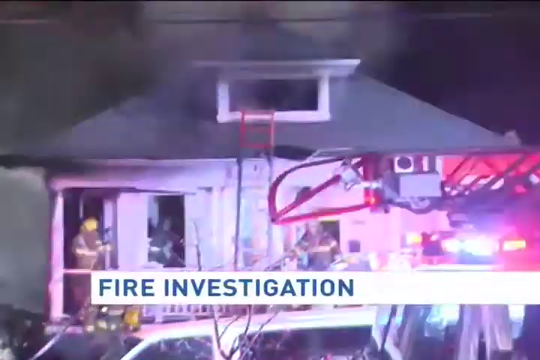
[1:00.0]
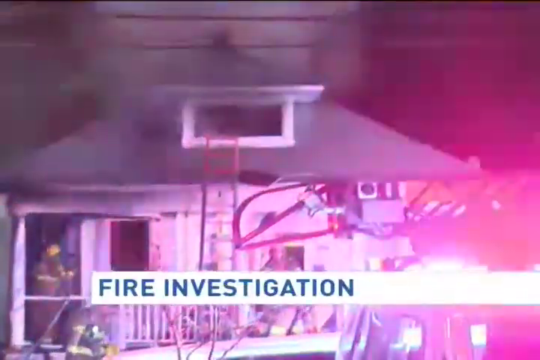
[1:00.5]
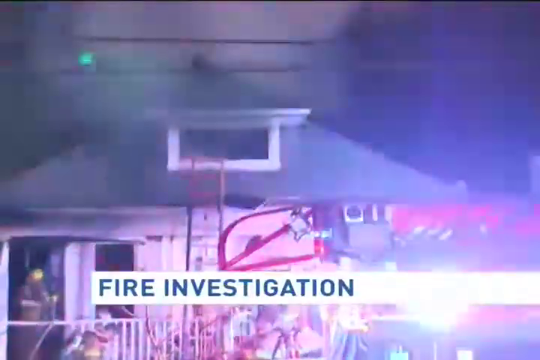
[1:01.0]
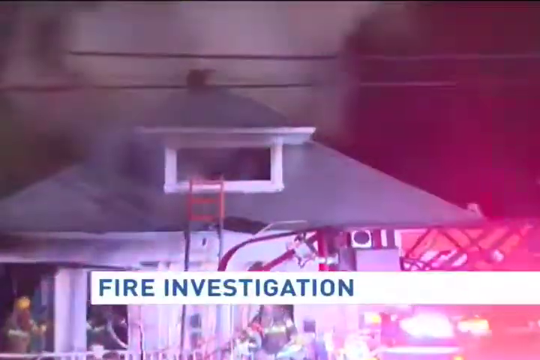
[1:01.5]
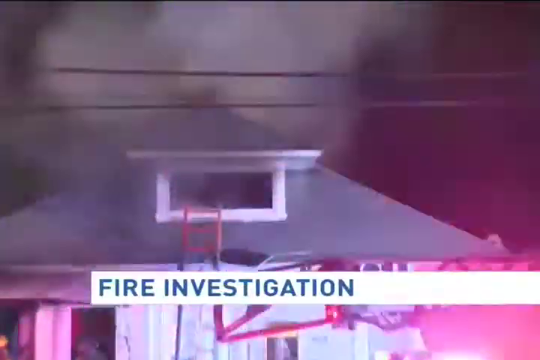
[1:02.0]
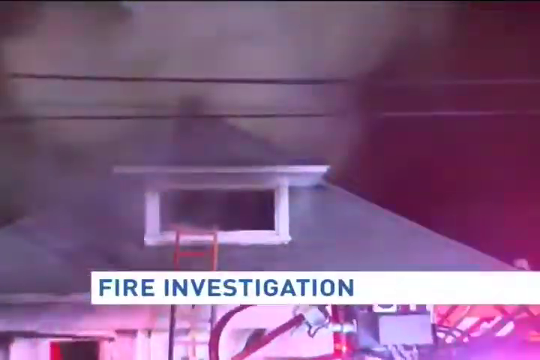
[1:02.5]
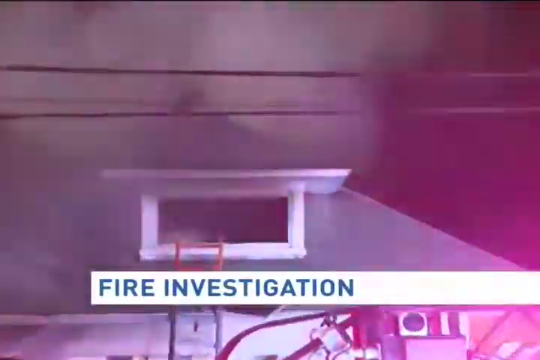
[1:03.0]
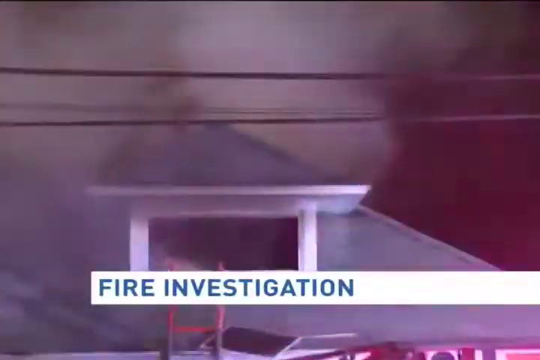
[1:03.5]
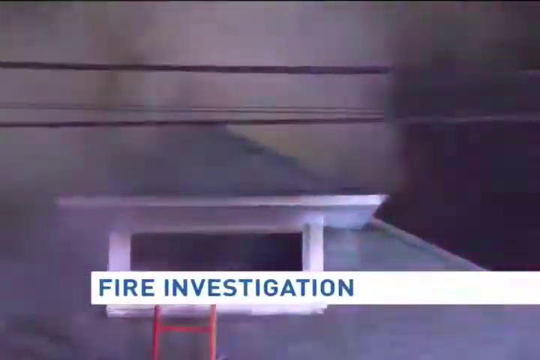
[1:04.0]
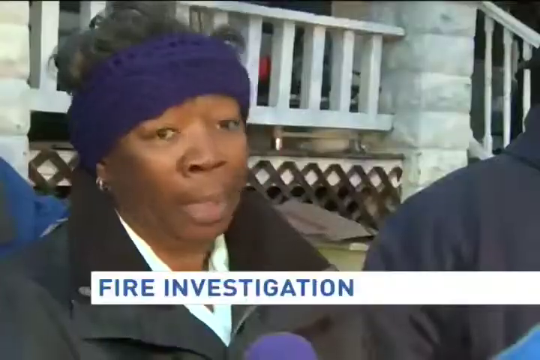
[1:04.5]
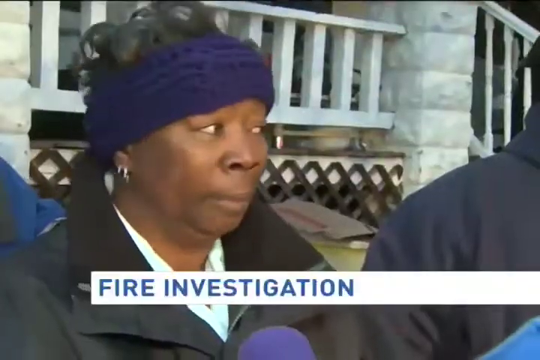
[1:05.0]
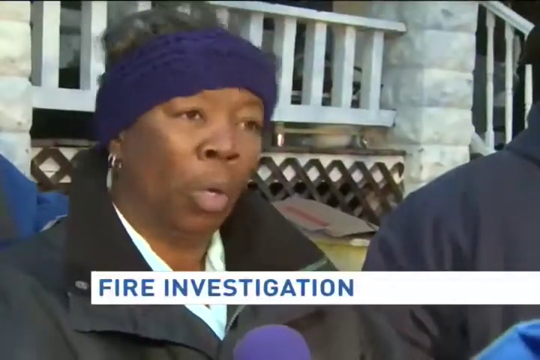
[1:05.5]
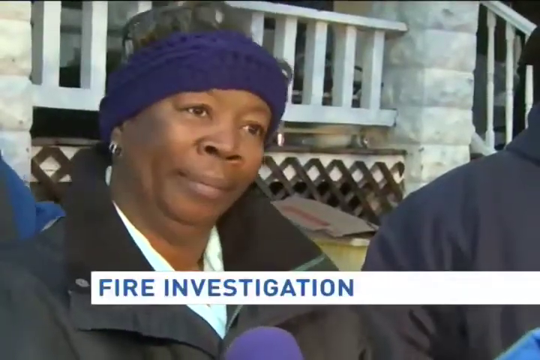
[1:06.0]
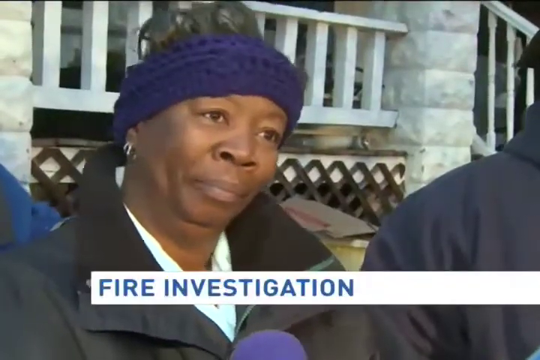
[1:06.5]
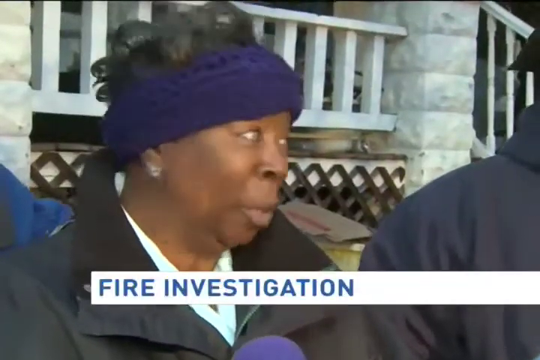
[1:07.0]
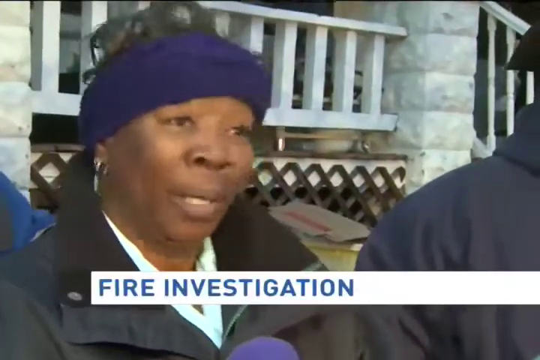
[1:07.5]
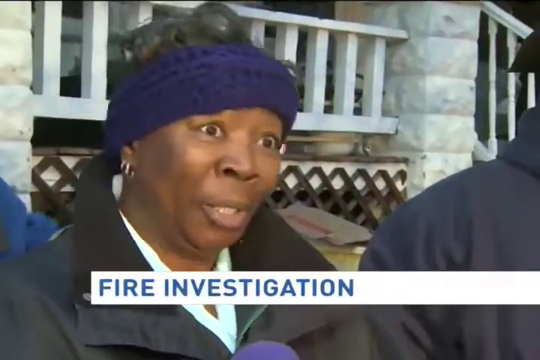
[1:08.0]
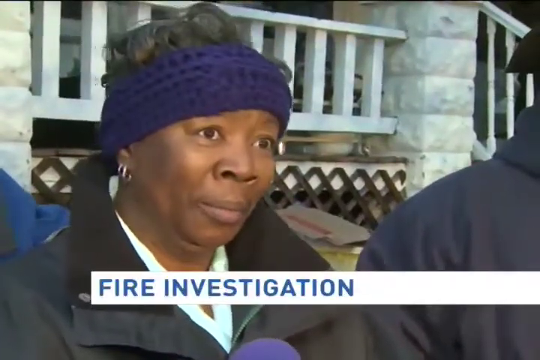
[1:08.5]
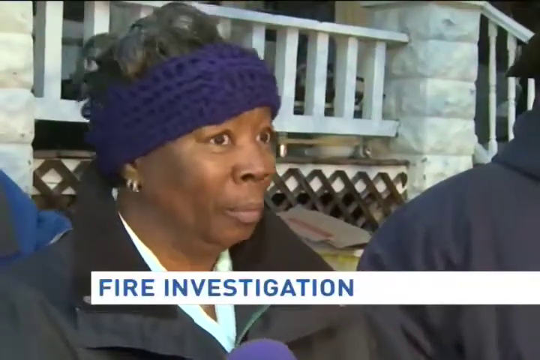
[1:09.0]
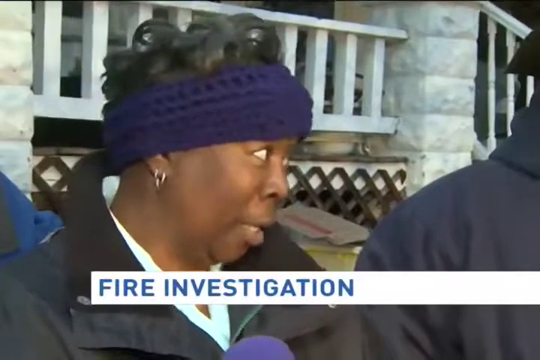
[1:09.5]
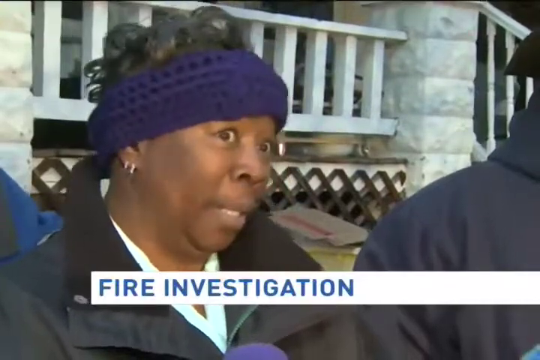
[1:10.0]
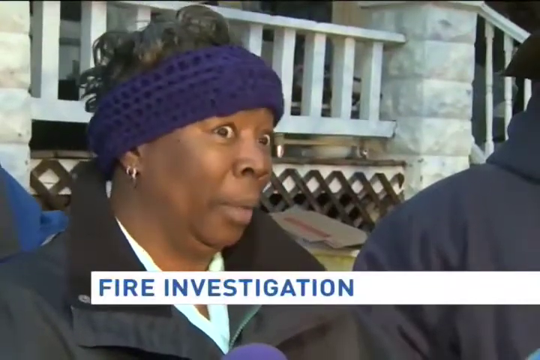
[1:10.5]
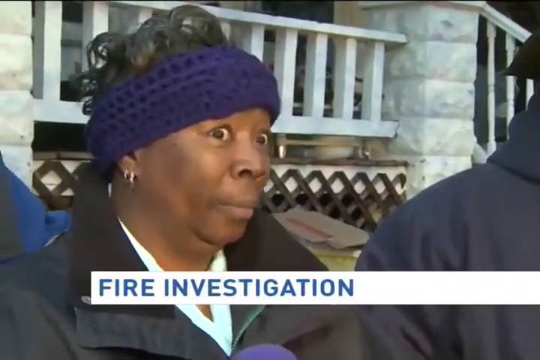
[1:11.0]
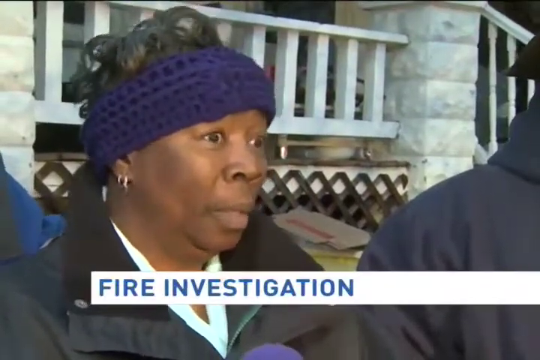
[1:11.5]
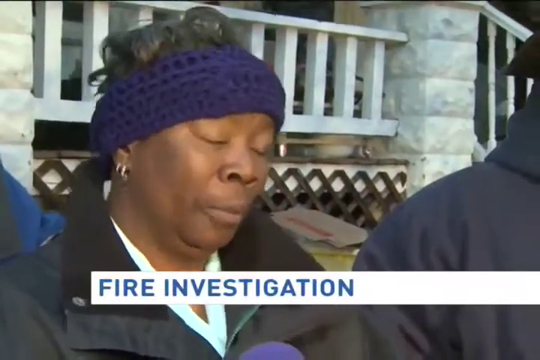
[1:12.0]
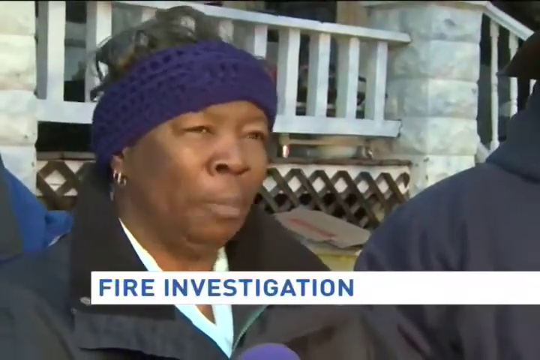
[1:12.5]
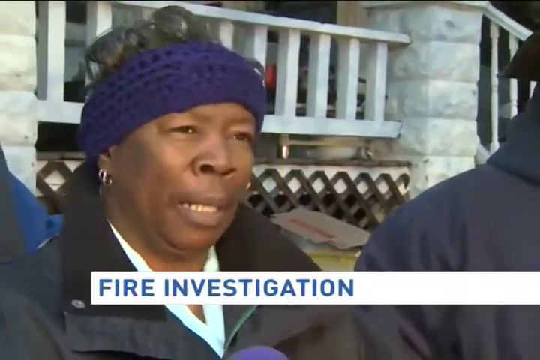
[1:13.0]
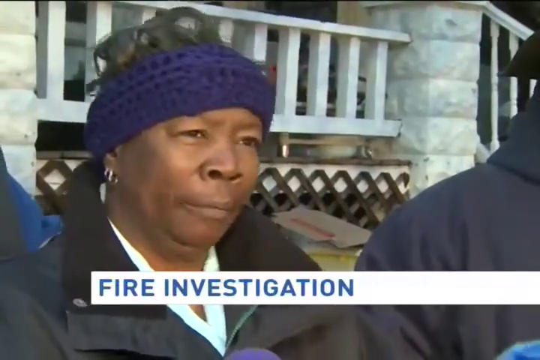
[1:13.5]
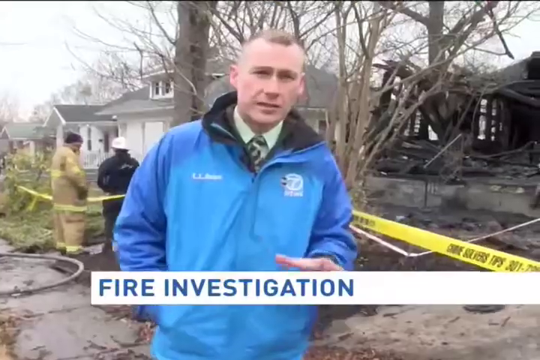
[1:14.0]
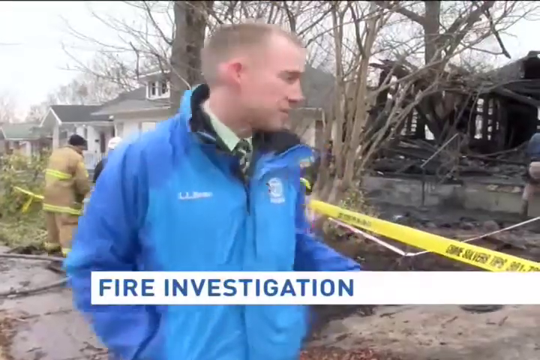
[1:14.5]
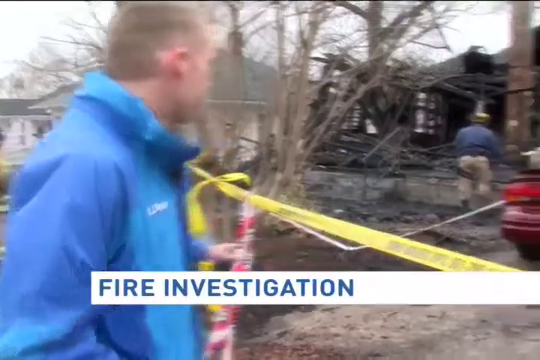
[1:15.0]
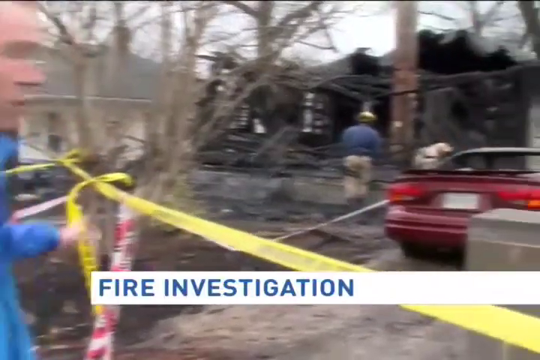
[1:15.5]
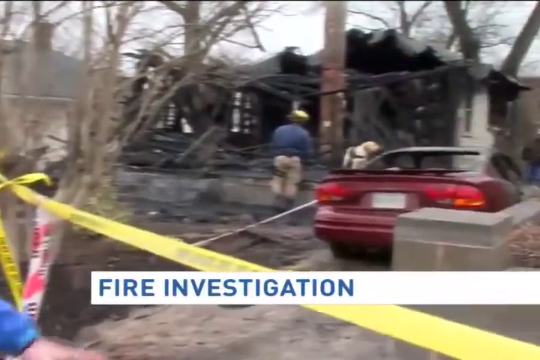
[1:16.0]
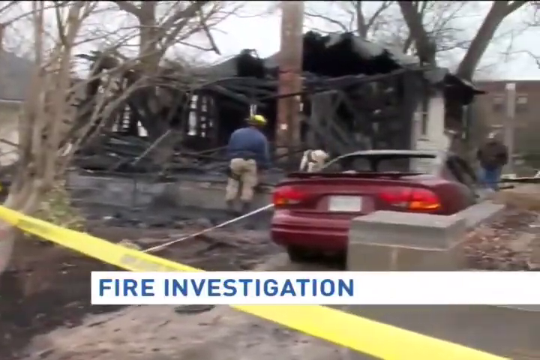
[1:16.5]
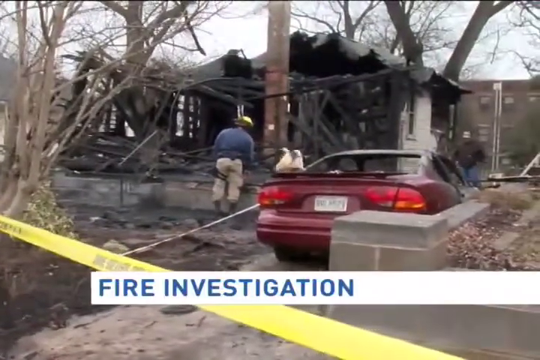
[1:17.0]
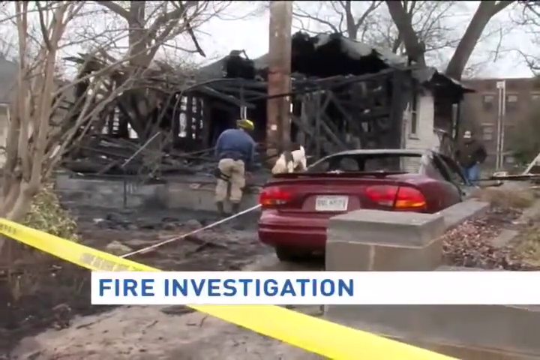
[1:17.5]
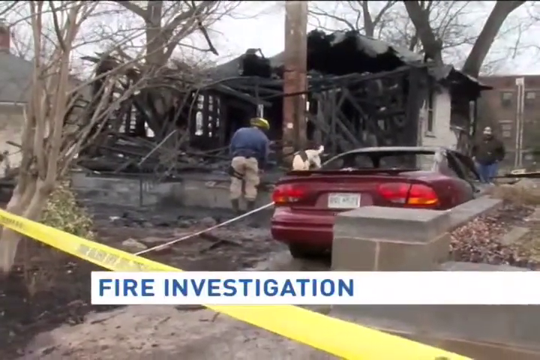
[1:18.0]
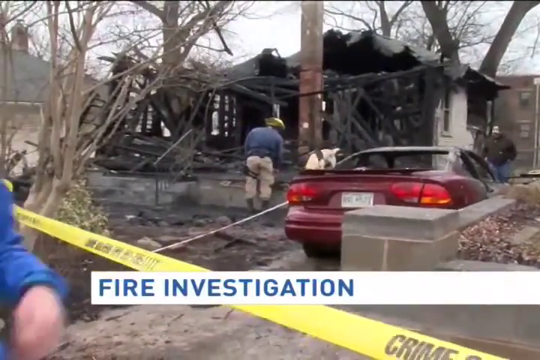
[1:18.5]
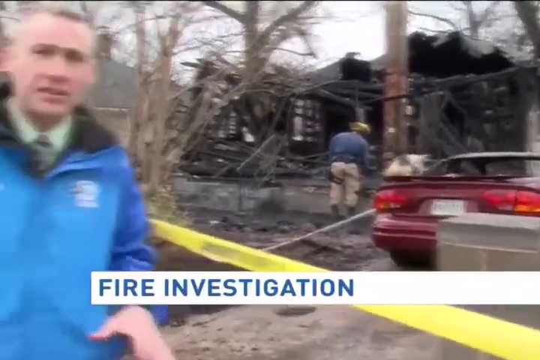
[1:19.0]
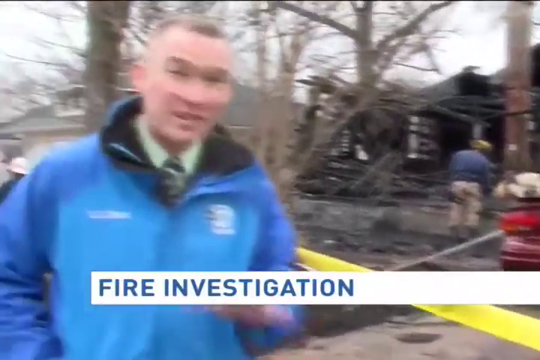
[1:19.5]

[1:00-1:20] Workers work on the house as "fire investigation" appears at the bottom of the screen, and a large fire truck is on the right side. The camera zooms in on the top of the building where the wires are, seemingly focusing on the electrical wires outside the building, and a very tall red ladder leads to the top of the building. It cuts back to the woman being interviewed outside a house with a white staircase in the background; she wears a black jacket and looks very emotional as she talks to the camera. It then cuts to a man who appears to be a news reporter, wearing a blue jacket and standing in front of a completely burnt-down house, as the camera focuses on the house and the workers in it.